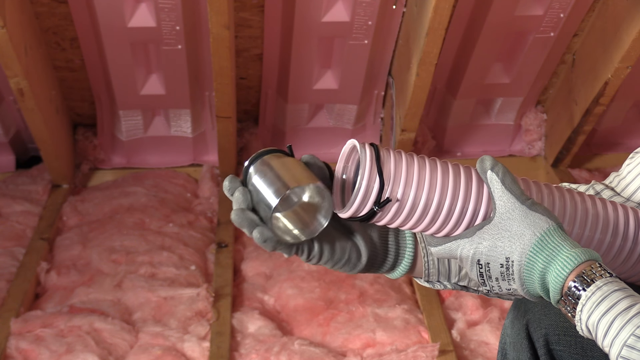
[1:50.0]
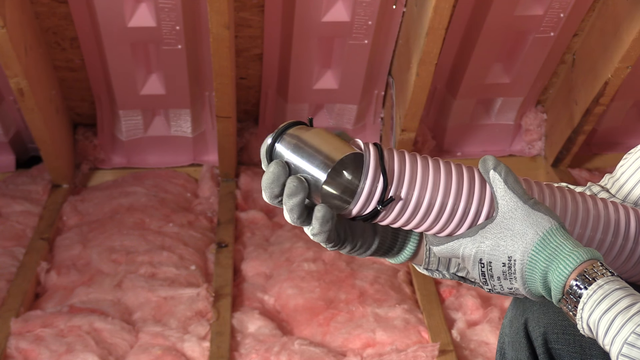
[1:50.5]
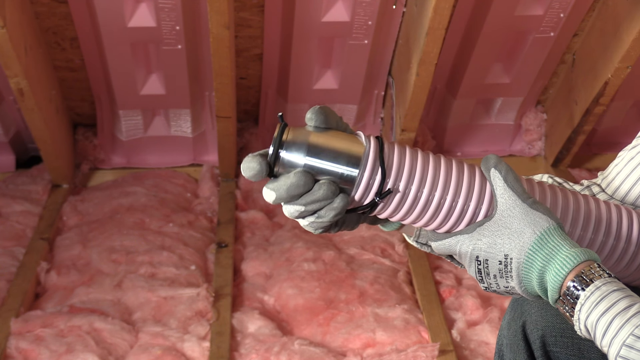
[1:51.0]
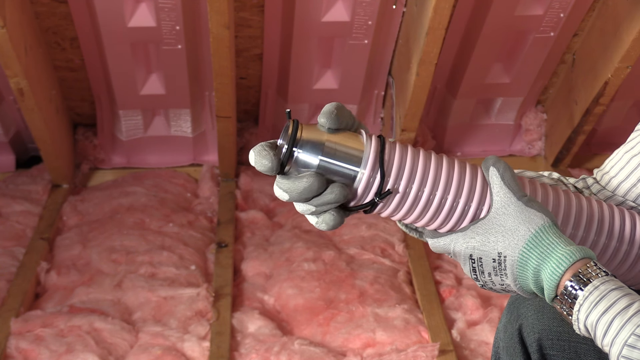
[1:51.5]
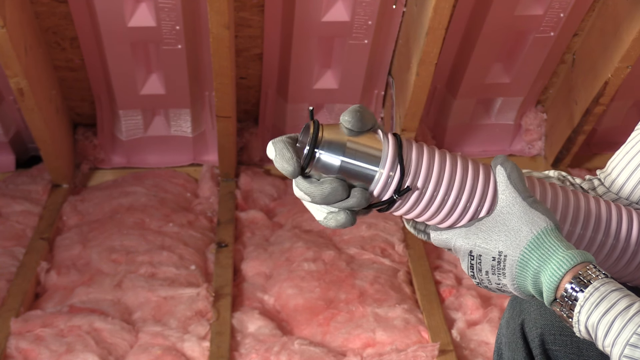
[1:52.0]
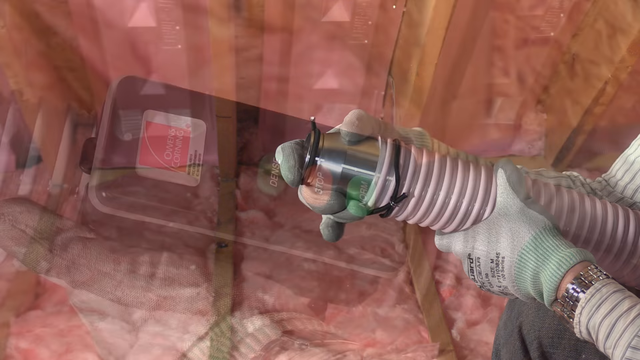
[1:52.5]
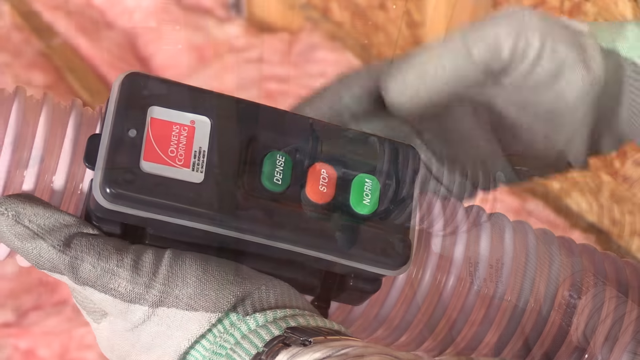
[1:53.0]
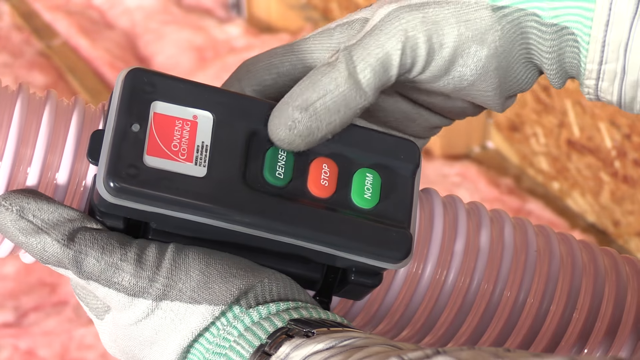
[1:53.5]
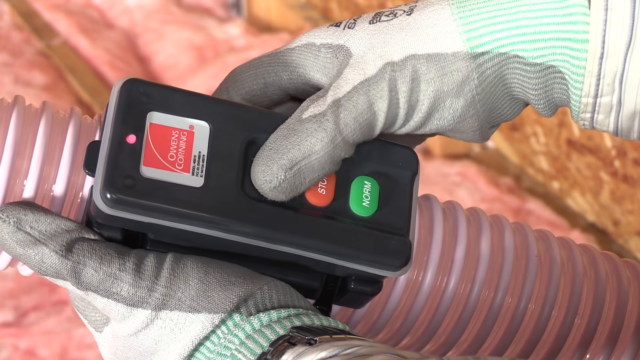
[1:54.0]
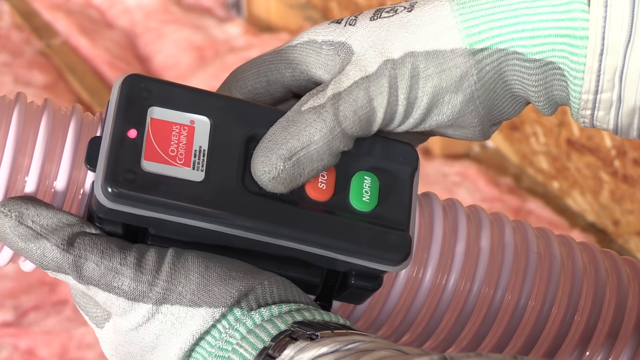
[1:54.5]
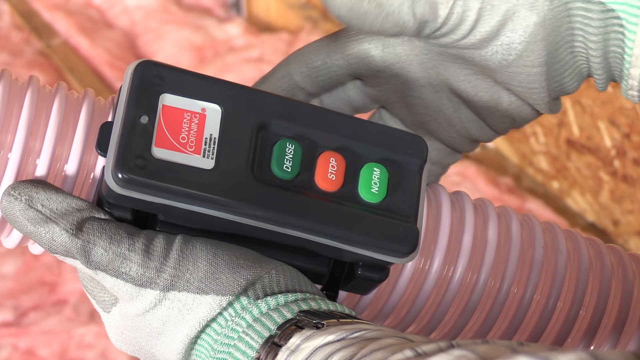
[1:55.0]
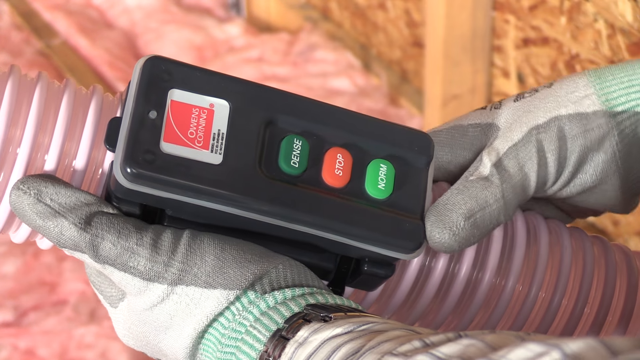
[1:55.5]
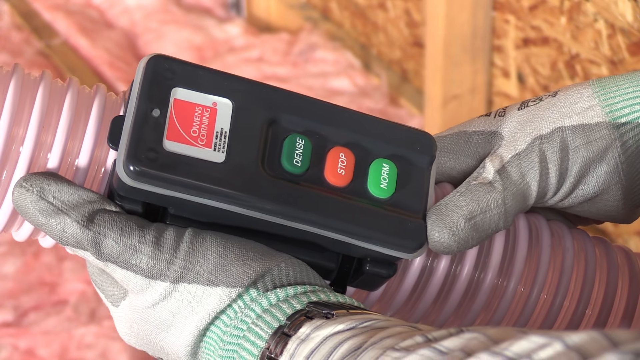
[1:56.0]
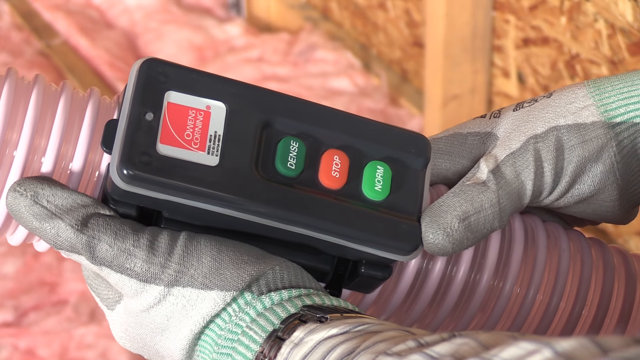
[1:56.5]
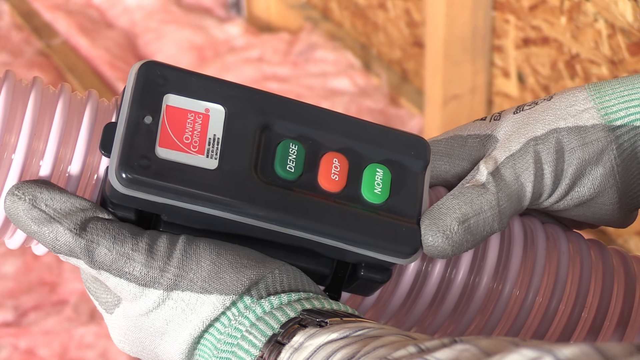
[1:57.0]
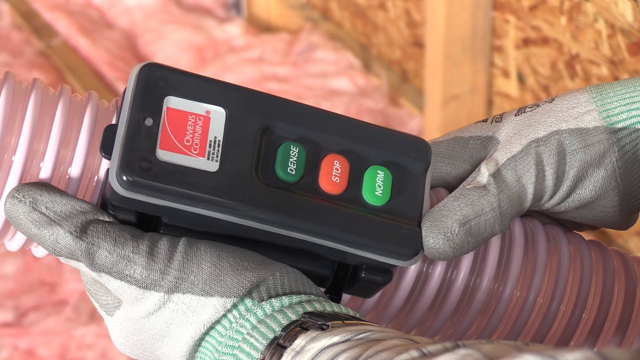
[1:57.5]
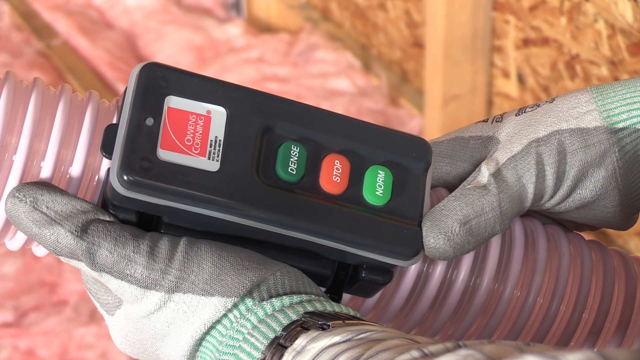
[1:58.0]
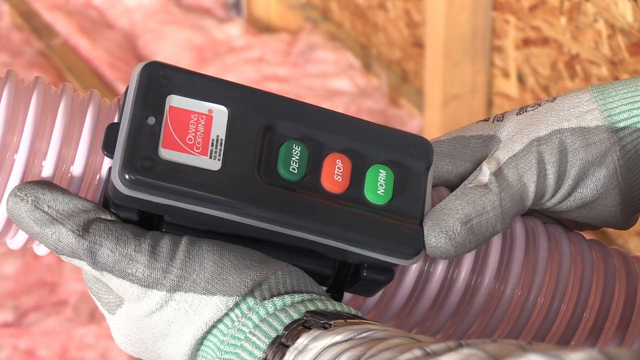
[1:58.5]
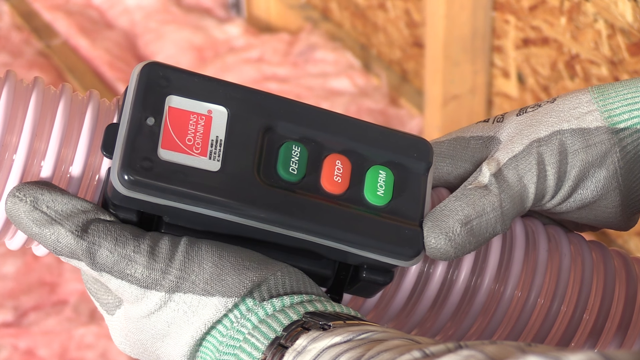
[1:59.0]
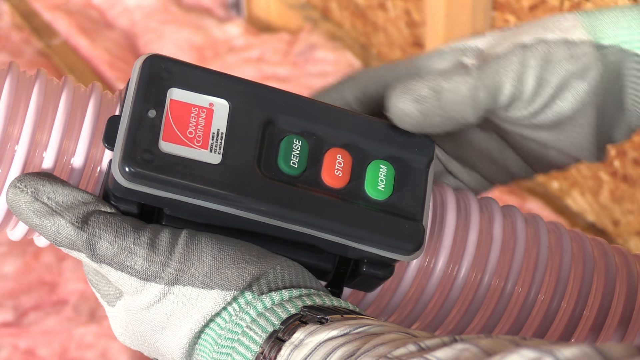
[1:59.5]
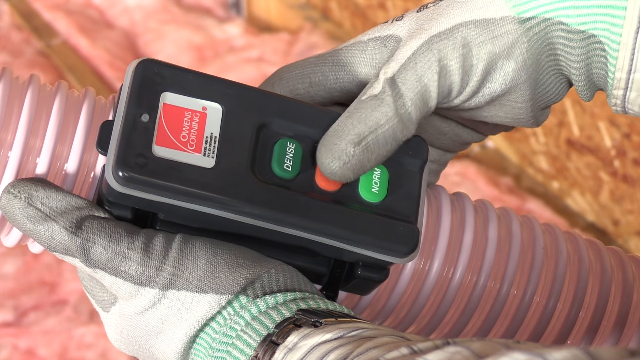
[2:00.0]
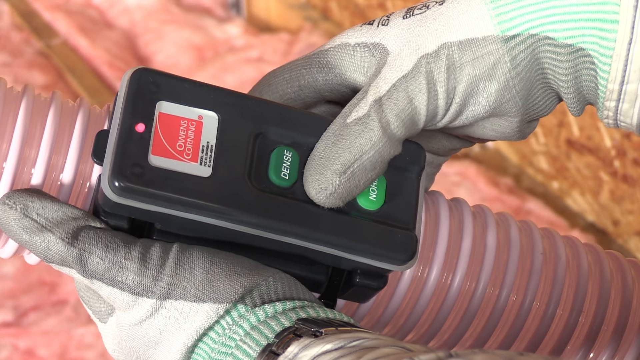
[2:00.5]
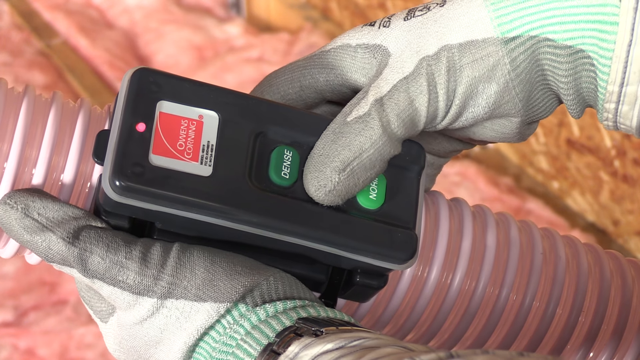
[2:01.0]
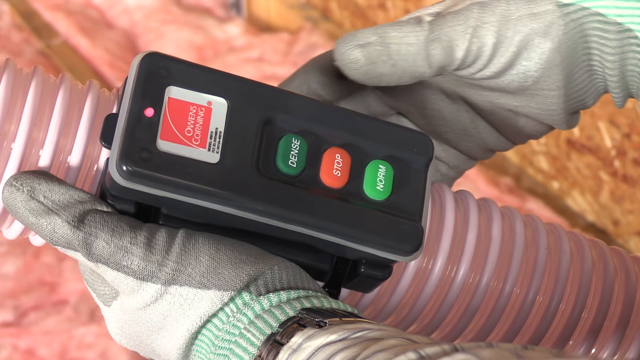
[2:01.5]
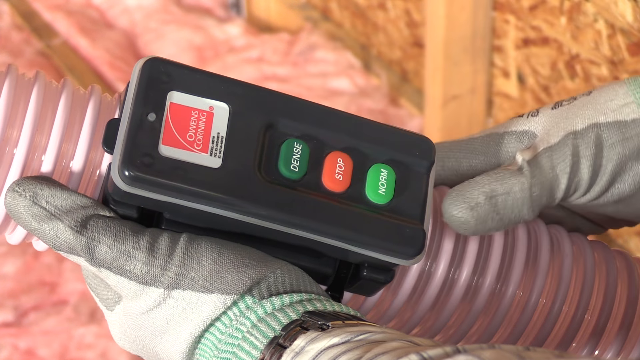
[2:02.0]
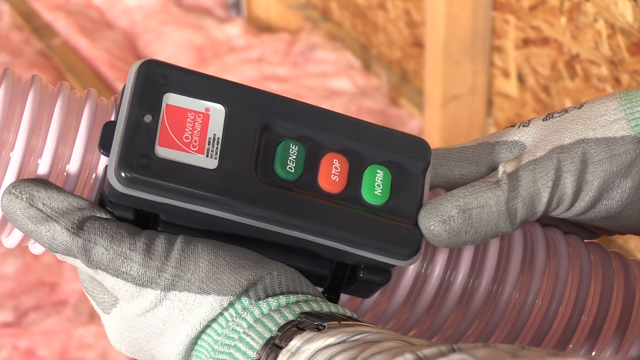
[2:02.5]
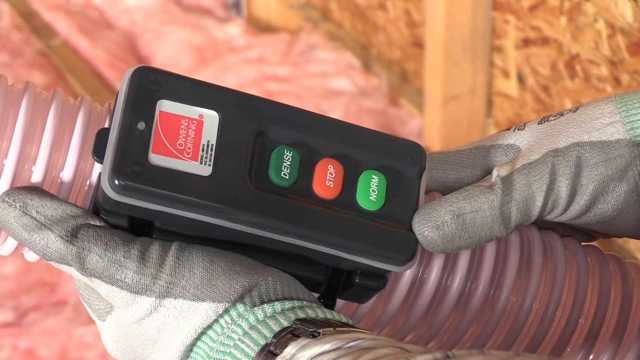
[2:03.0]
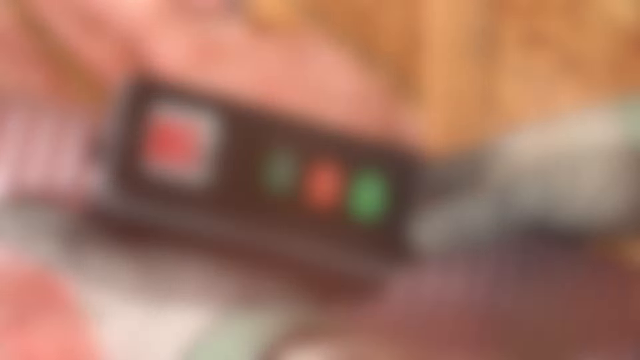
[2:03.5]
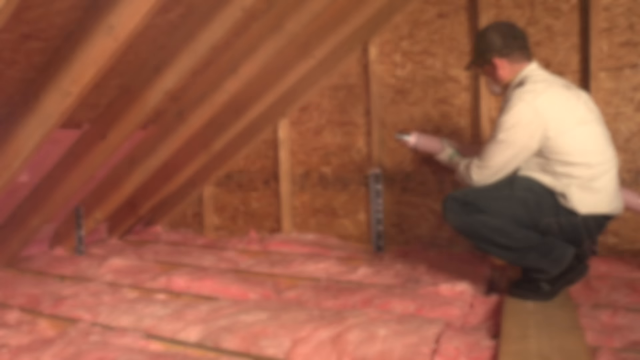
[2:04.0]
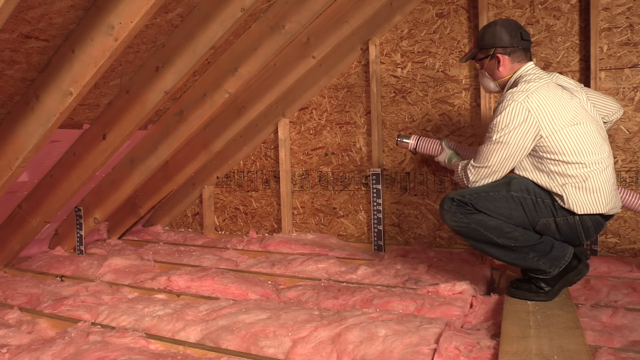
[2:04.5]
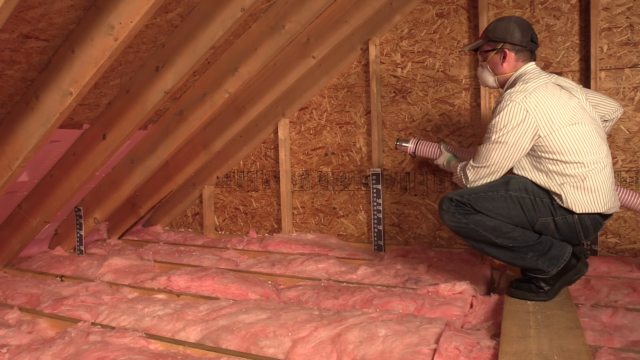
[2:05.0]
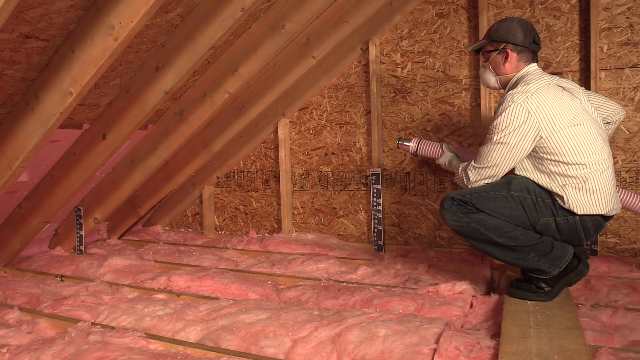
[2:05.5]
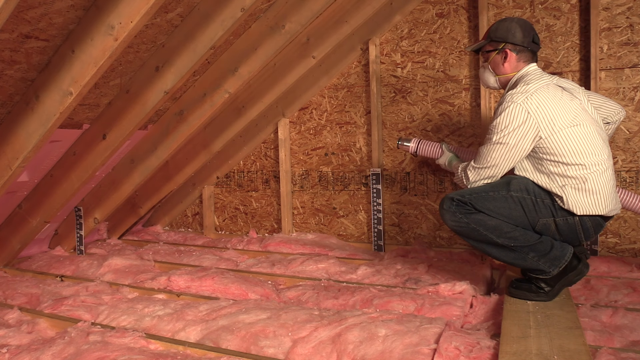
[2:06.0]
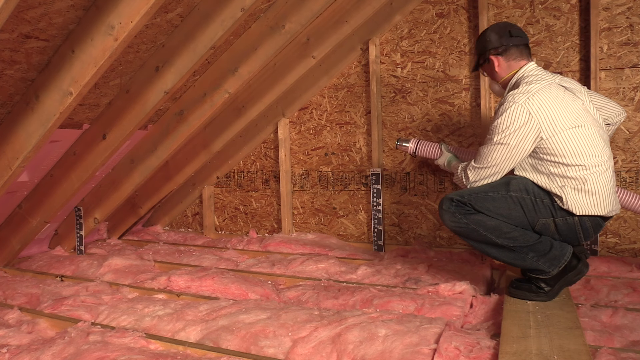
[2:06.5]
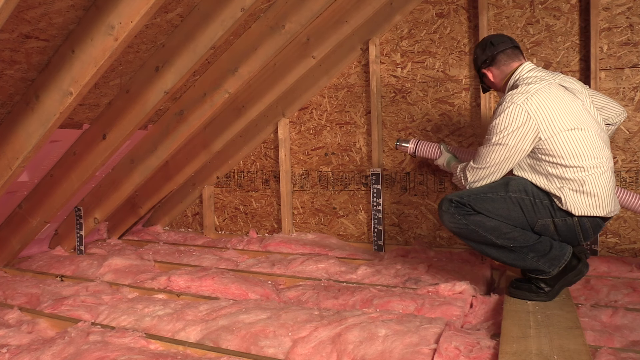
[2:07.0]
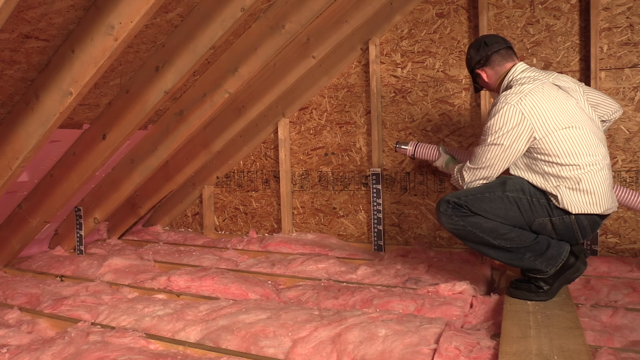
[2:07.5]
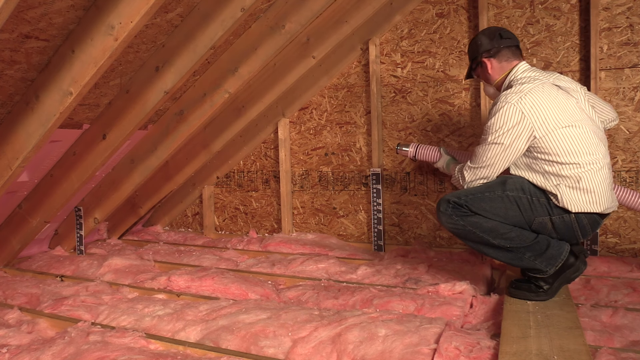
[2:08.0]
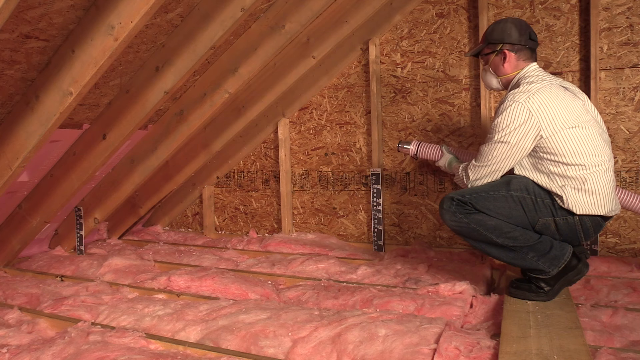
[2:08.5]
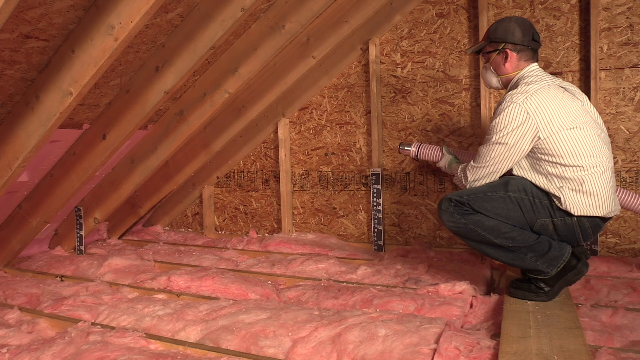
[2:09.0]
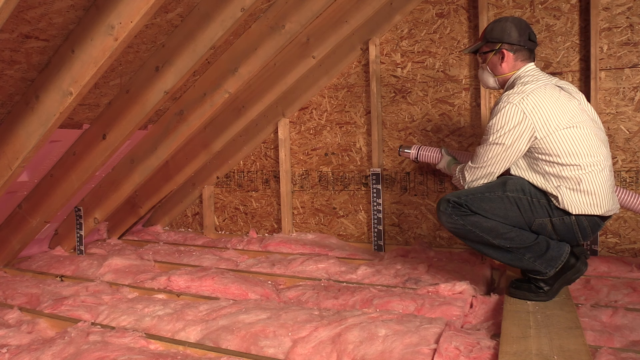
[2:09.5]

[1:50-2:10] A man working in an attic is on the right-hand side of the screen, with only his leg and arms visible. He holds pink tubing that looks like a hose and puts a silver-looking metal cap onto its end, looking like he fits it inside the hose and kind of twists it to make it secure. The scene changes to a close-up of a more interior part of the hose, where the end is no longer visible; the pink hose runs from upper left to lower right, with a gray control box attached to it and part of his arms and hands visible. The control box has three vertically placed buttons, dark green, orange, and light green, labeled "dense", "stop", and "norm". He first pushes the green "dense" button, and a pink light lights up at the top; then he pushes the "stop" button and another light lights up. The scene then switches to him crouching on a board on the right, facing left toward the slanted roof, holding the hose.